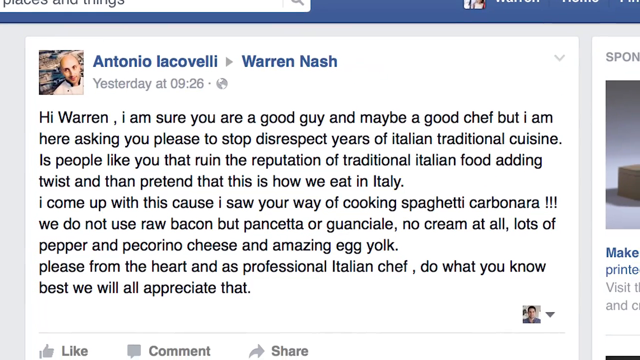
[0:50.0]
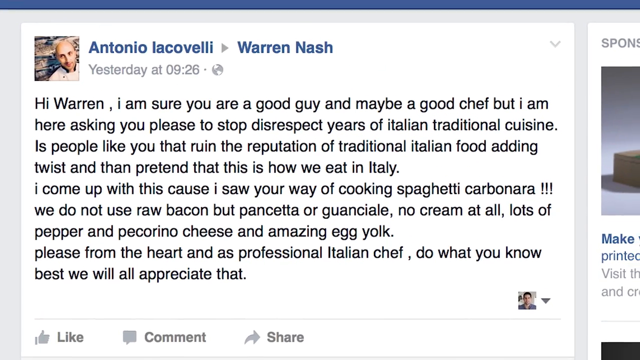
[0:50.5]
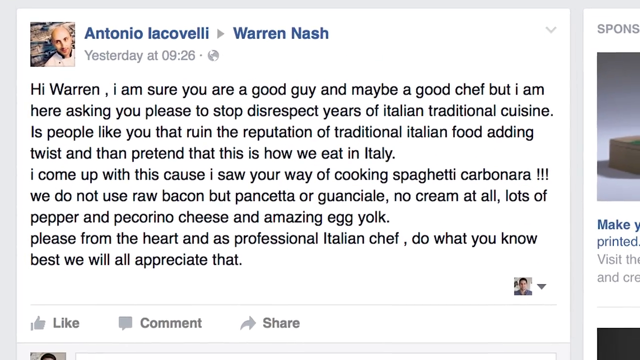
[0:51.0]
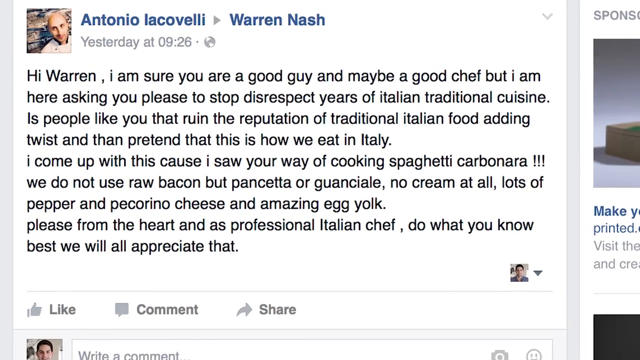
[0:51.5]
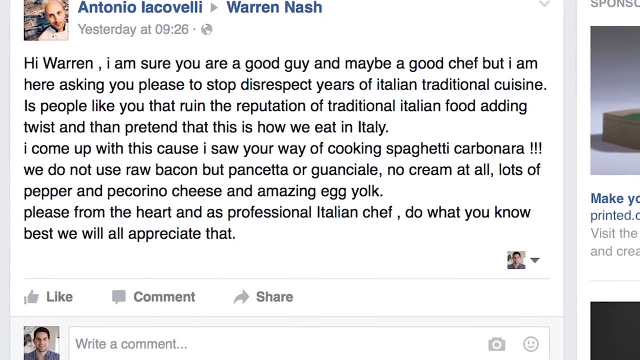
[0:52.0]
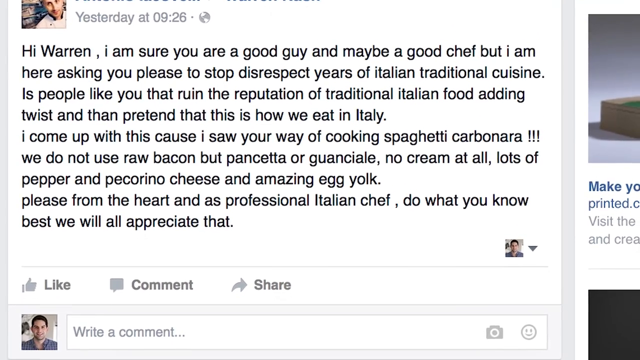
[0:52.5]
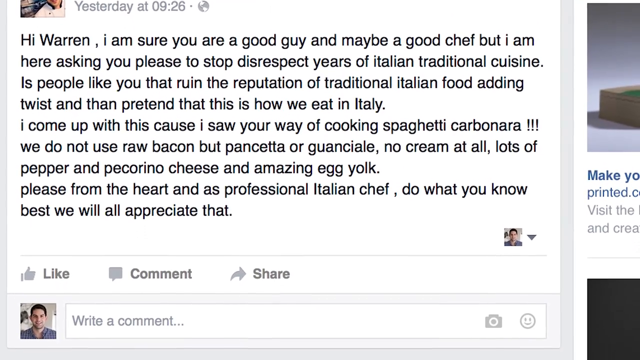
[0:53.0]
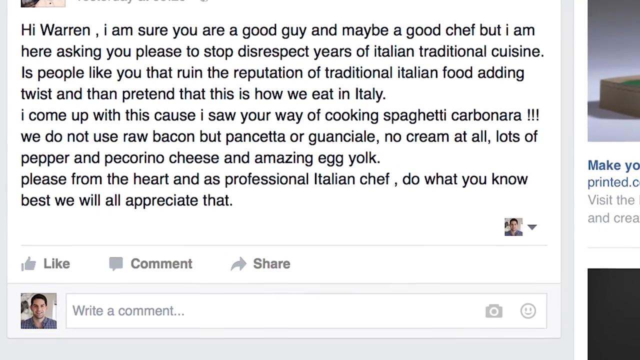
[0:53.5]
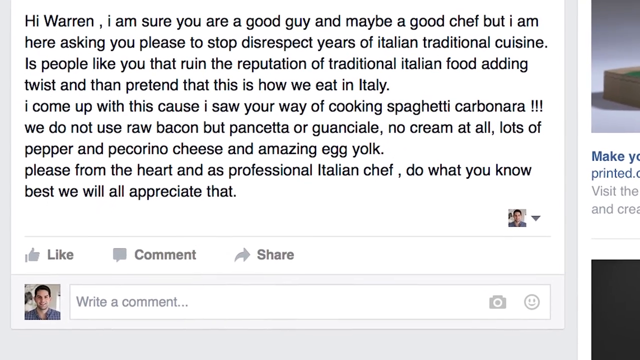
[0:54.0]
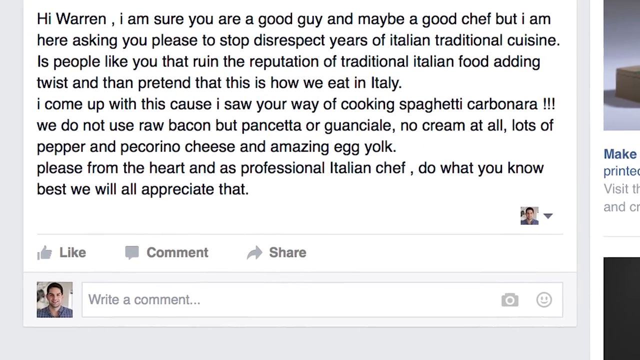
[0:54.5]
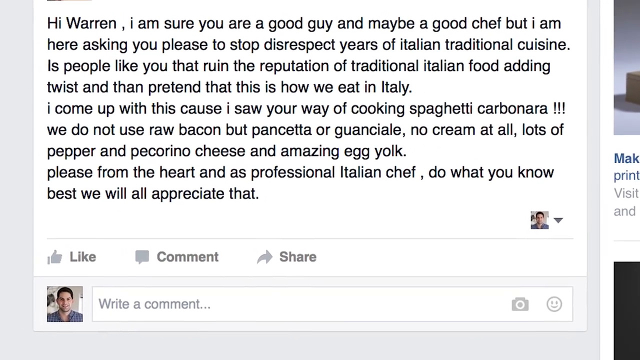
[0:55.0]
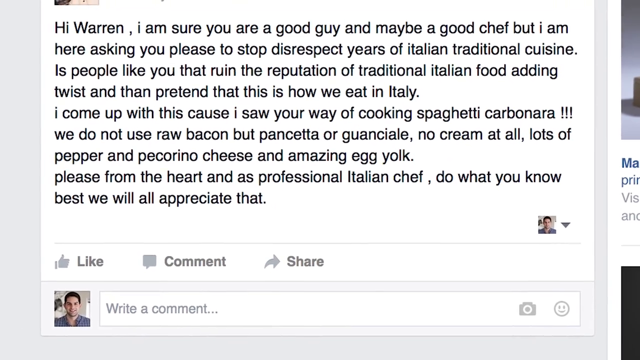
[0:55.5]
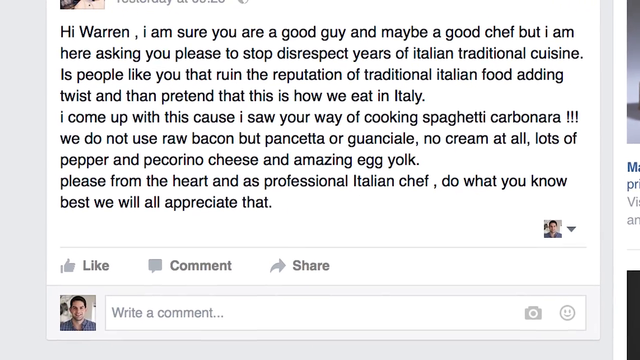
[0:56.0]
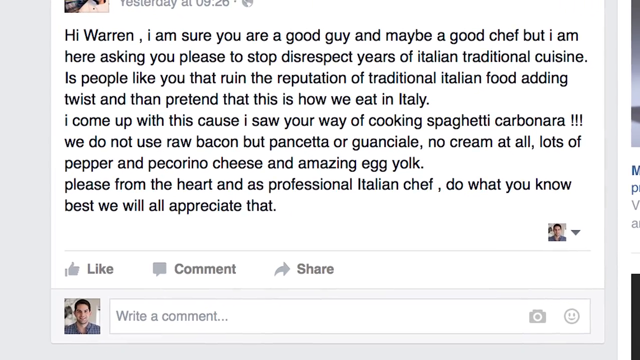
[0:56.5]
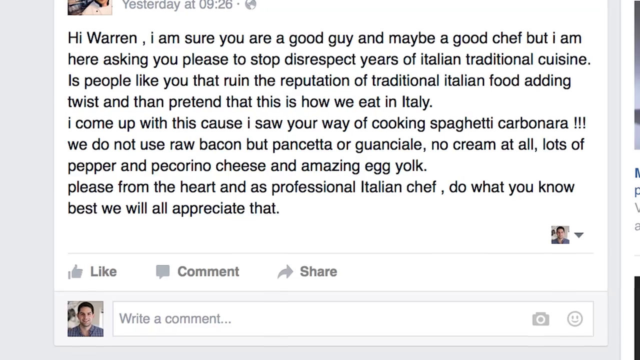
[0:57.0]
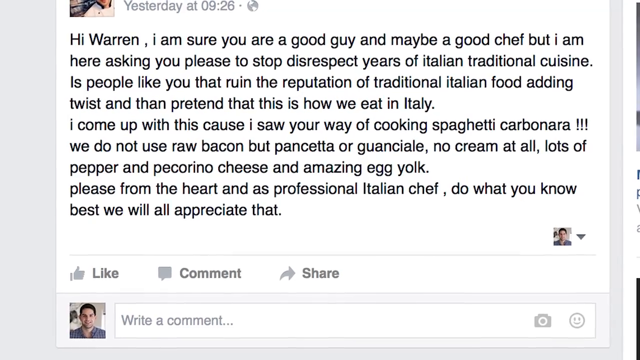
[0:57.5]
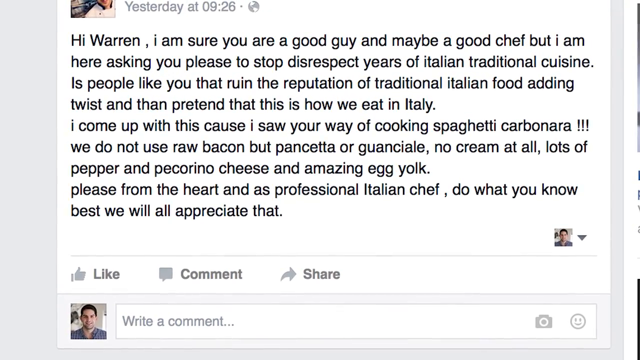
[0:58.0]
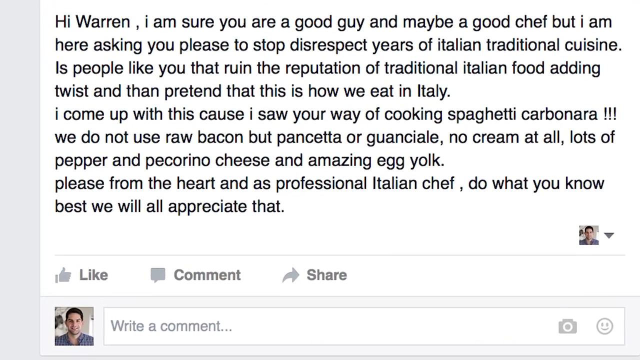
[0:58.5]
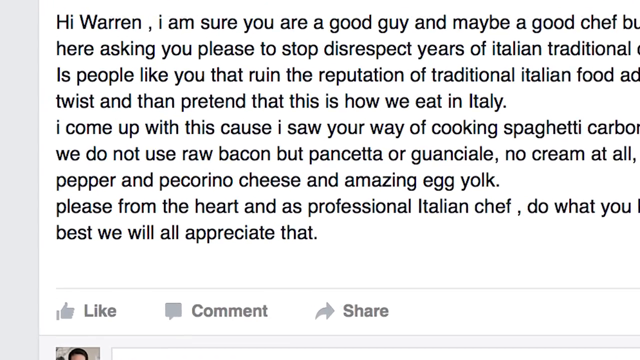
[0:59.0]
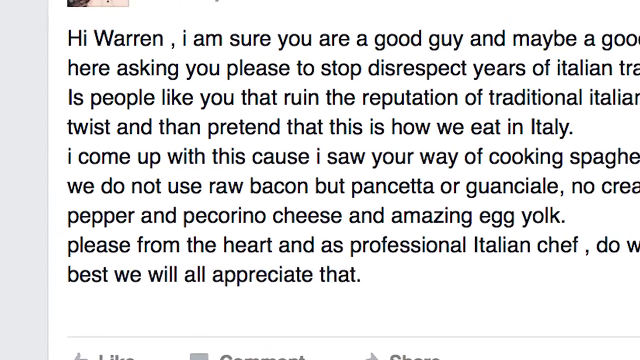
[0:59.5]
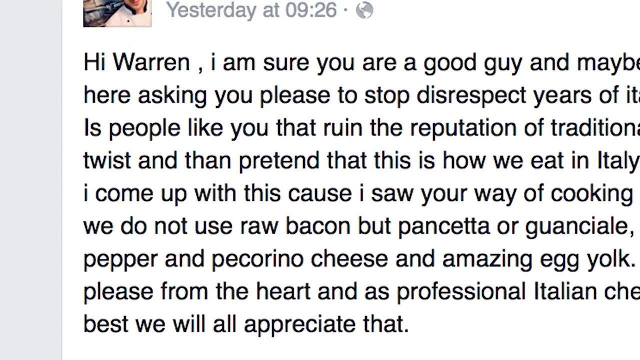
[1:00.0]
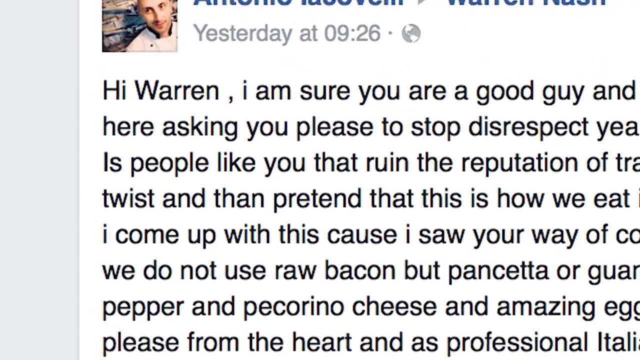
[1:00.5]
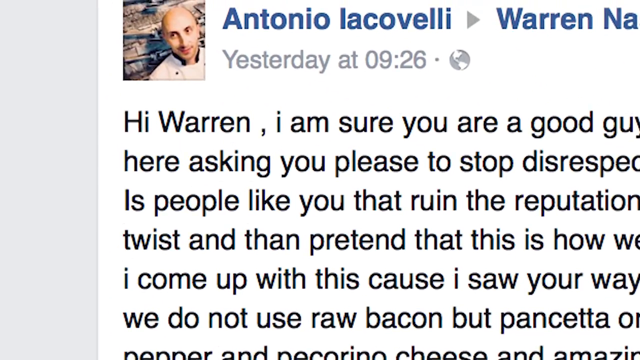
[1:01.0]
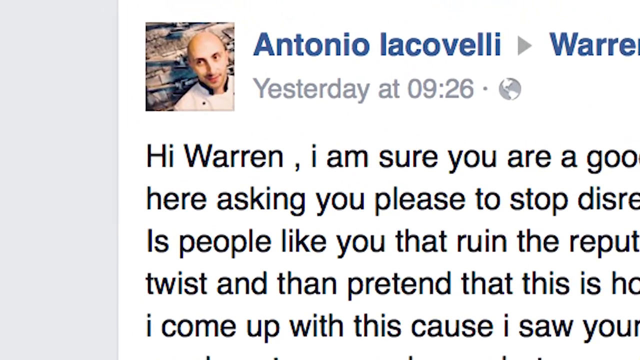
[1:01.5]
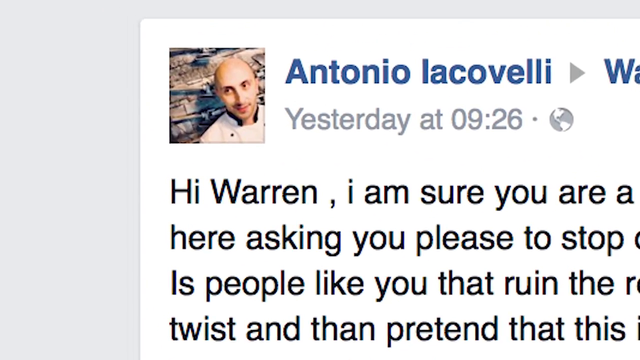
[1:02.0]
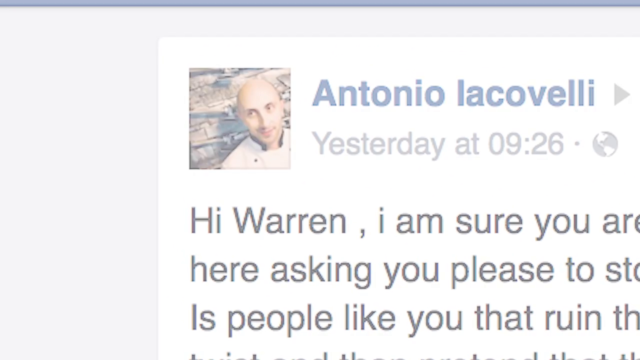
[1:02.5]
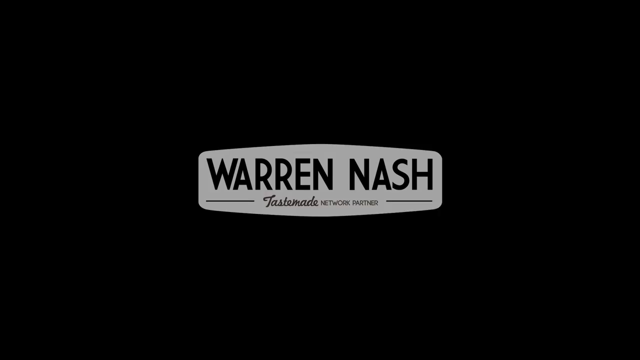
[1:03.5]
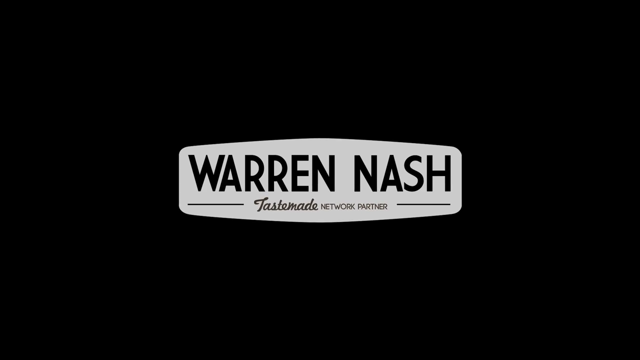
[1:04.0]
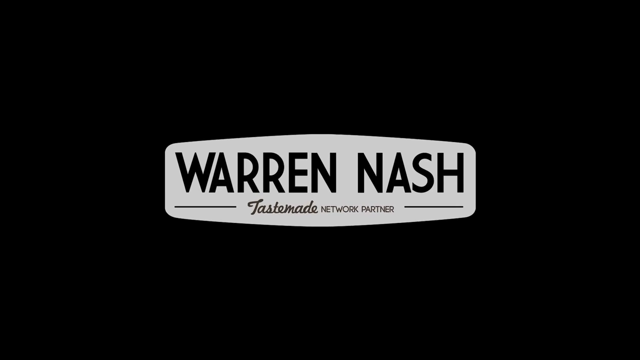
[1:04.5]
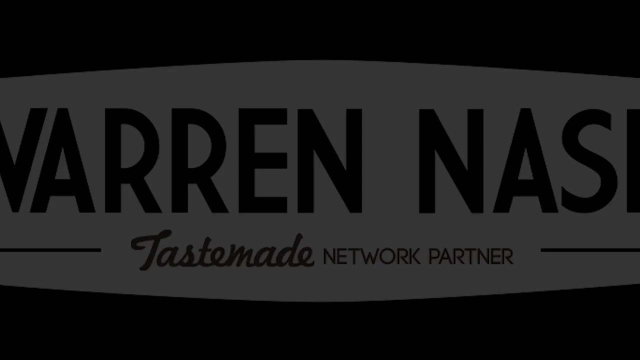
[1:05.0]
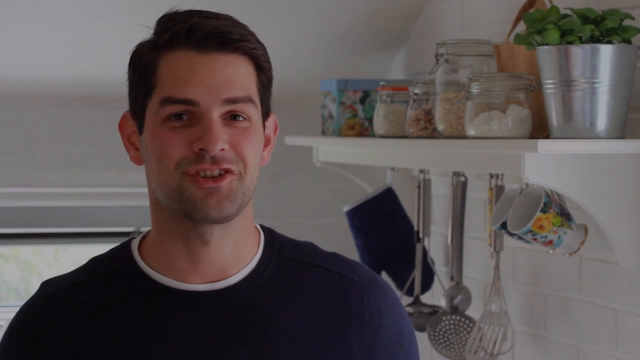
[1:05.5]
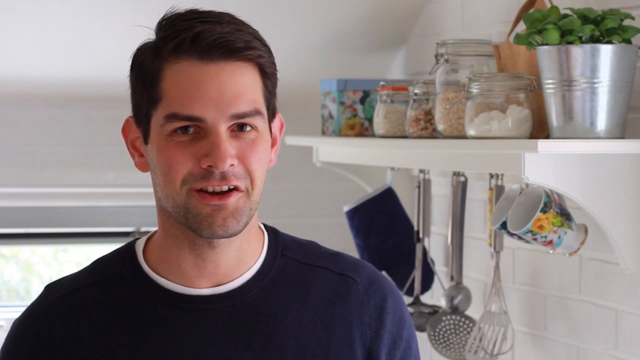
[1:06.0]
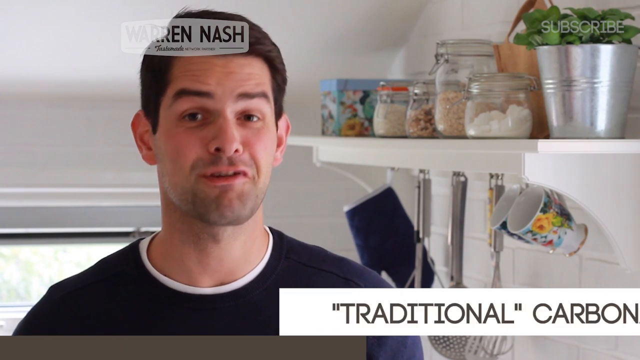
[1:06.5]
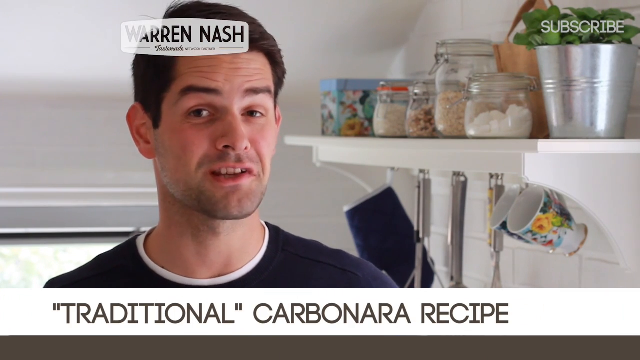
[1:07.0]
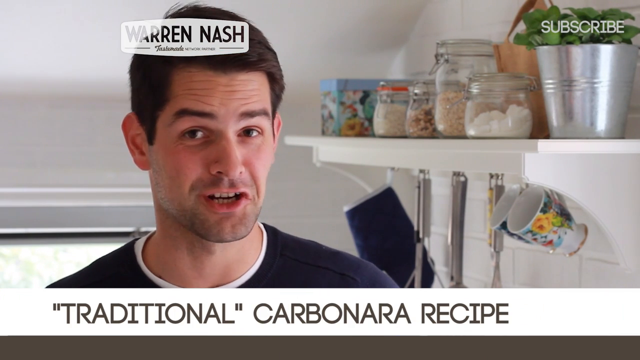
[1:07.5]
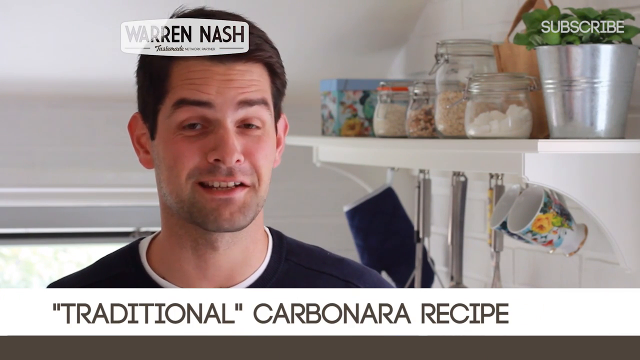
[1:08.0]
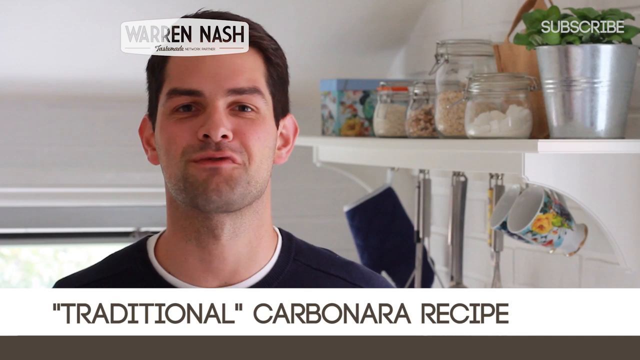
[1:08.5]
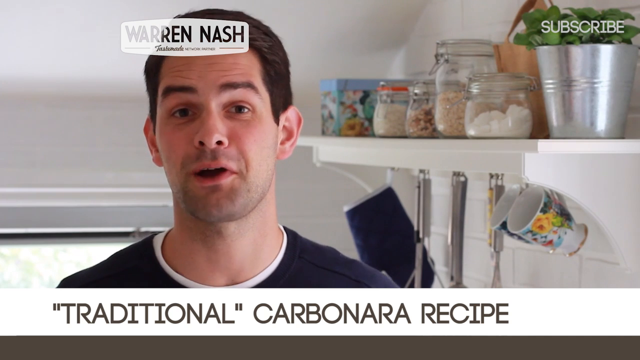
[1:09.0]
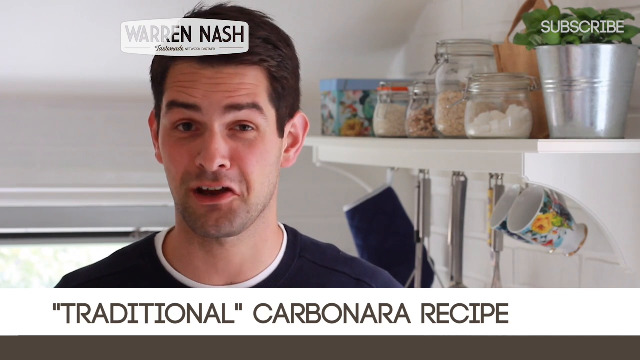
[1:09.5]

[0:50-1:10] The author of the post is clearly unhappy with how Warren prepared this traditional Italian cuisine. The post tells Warren to stop pretending and twisting Italian meals, says that this is not how they eat the meal, and says that they do not add raw bacon, do not add cream at all, and do not add lots of pepper and pepperoni with cheese, since they do it in a different way. It tells Chef Warren to please do what he does best and they will all appreciate that. It also seems to give him advice on how to make the spaghetti well and what to add, saying that as it is, the dish is not great and not eatable. Then text reading "Warren dish" appears, and Warren is seen talking about his recipe.